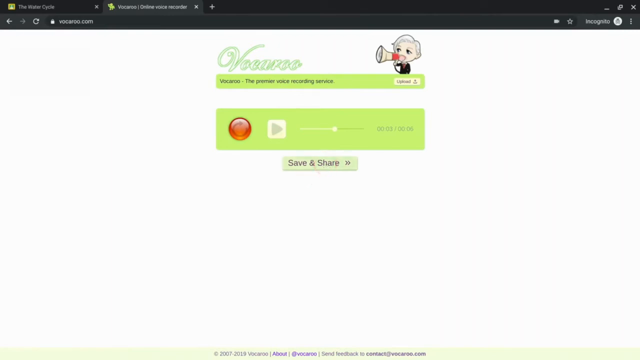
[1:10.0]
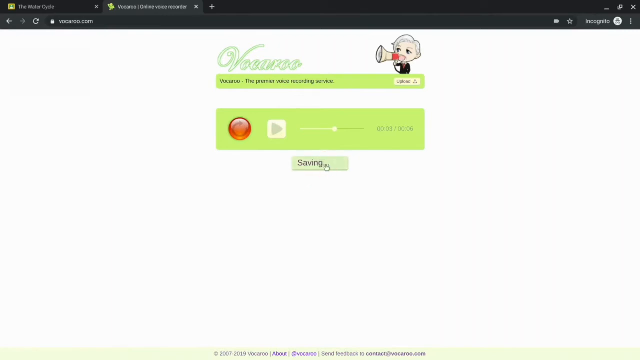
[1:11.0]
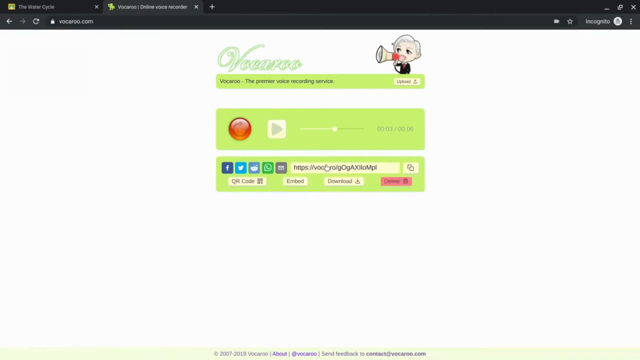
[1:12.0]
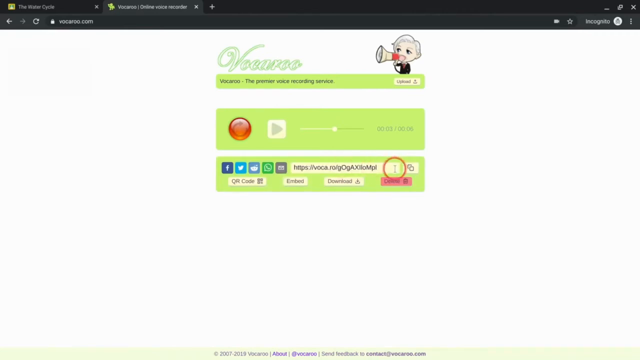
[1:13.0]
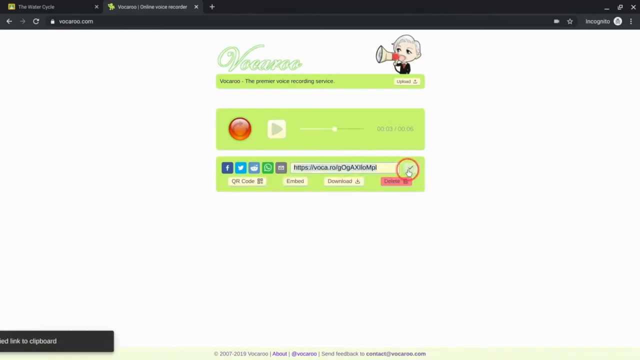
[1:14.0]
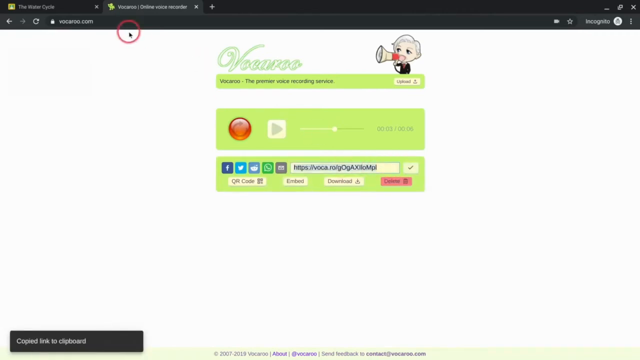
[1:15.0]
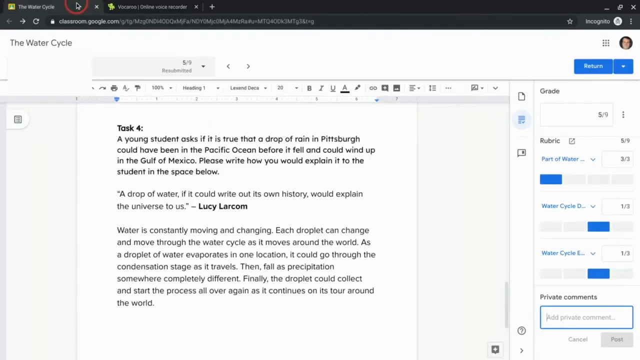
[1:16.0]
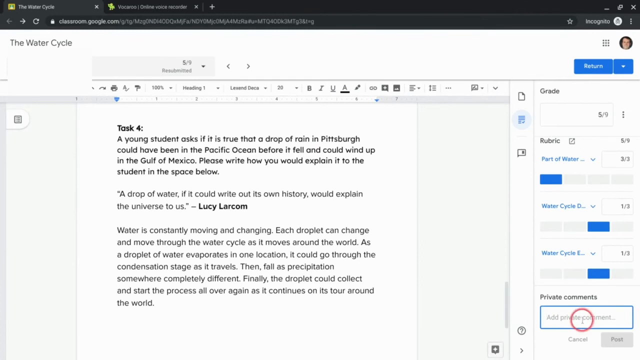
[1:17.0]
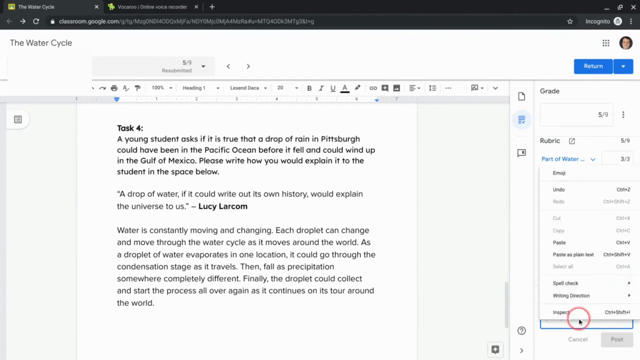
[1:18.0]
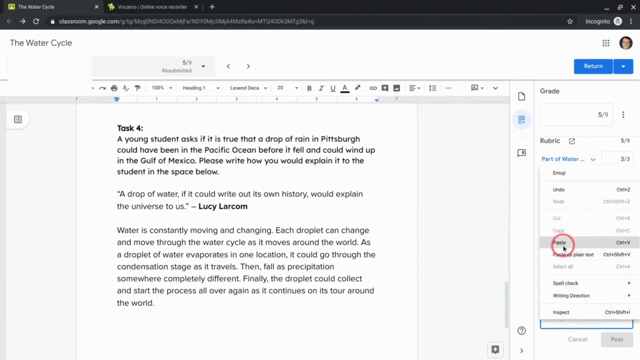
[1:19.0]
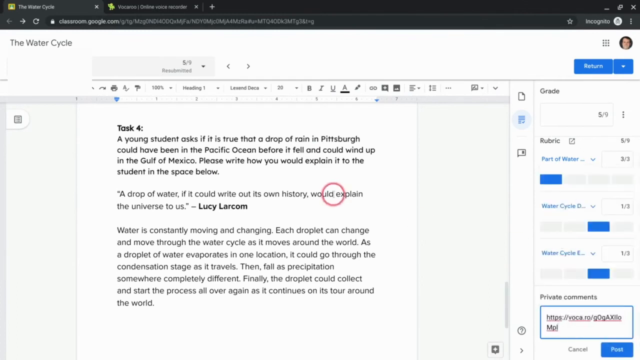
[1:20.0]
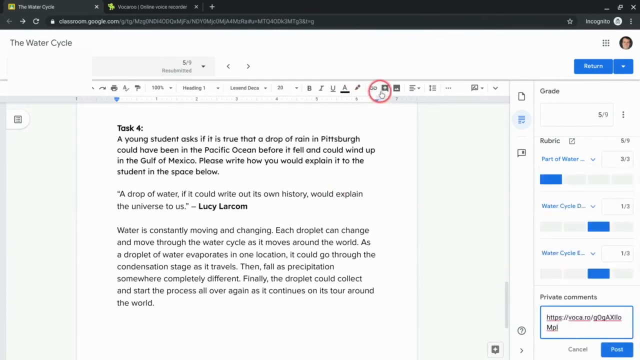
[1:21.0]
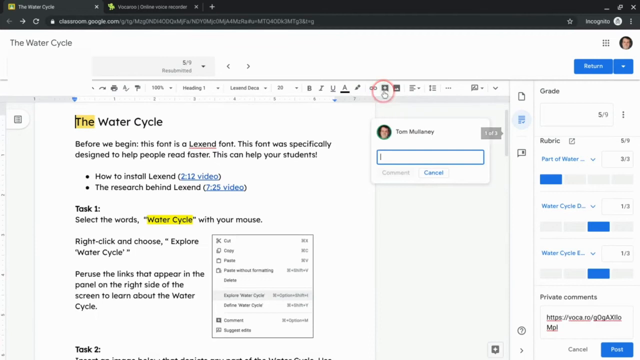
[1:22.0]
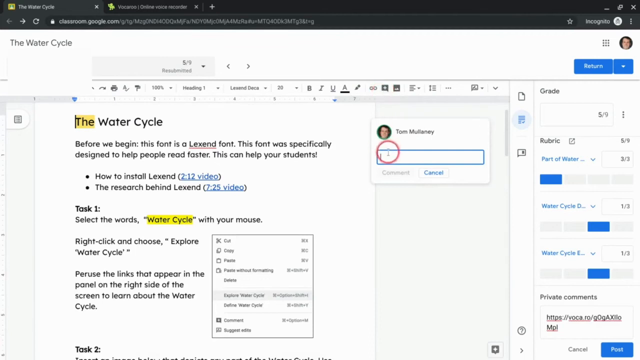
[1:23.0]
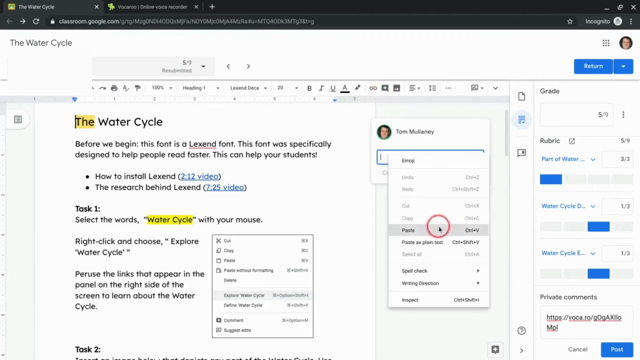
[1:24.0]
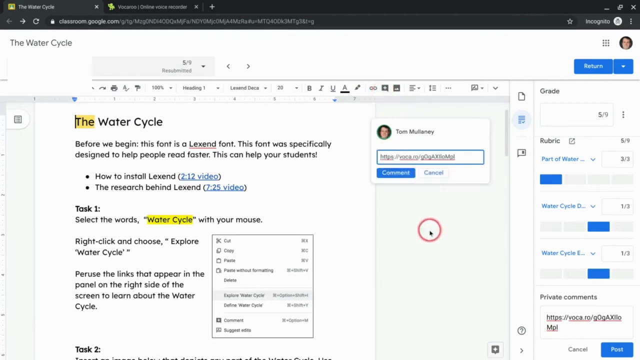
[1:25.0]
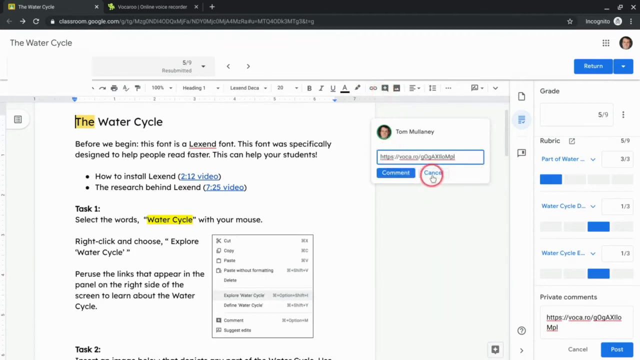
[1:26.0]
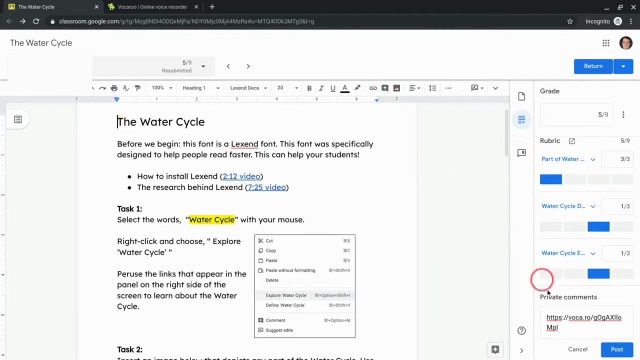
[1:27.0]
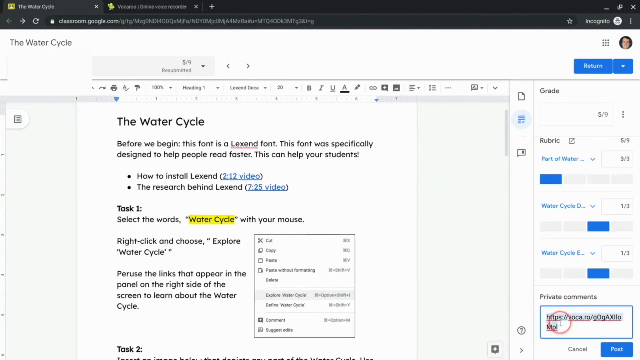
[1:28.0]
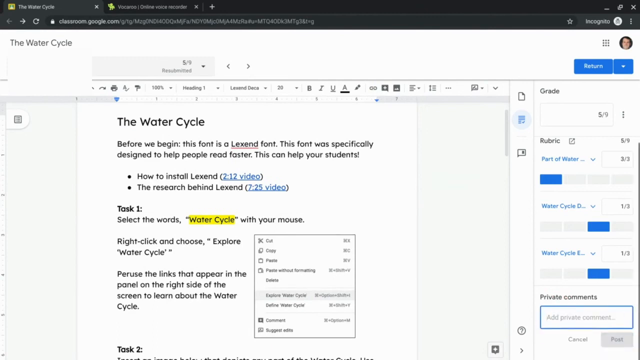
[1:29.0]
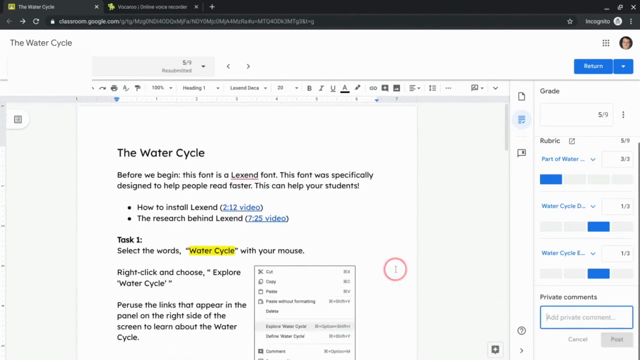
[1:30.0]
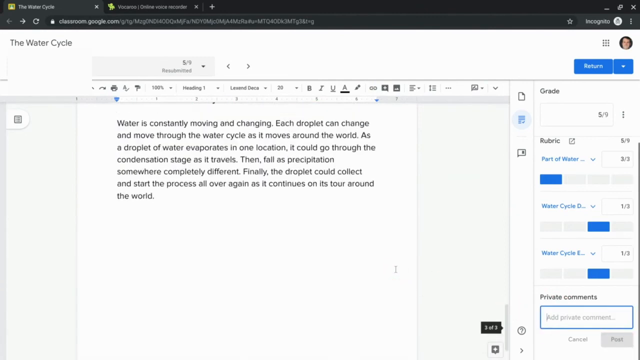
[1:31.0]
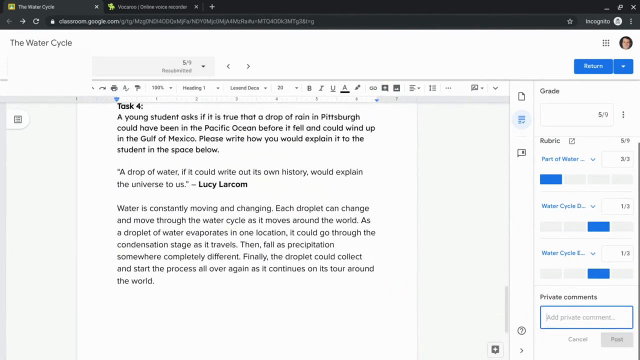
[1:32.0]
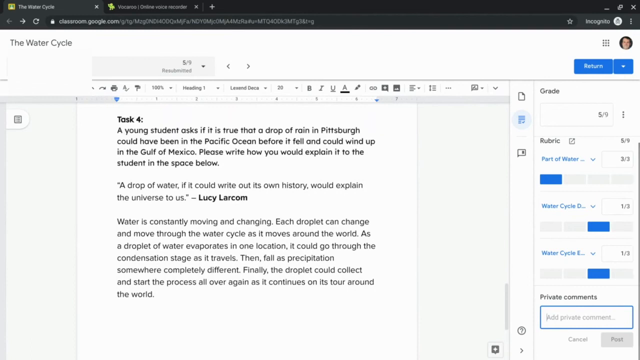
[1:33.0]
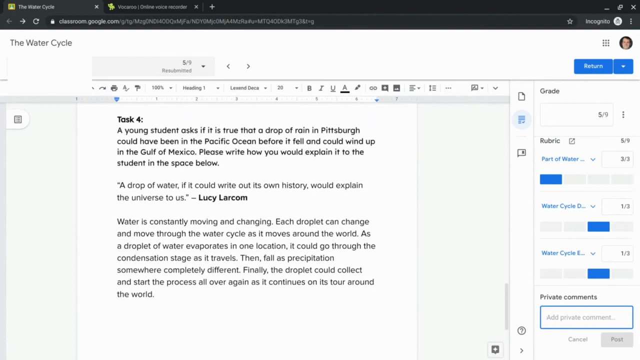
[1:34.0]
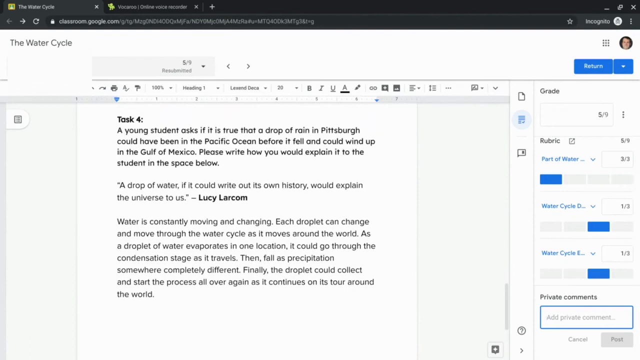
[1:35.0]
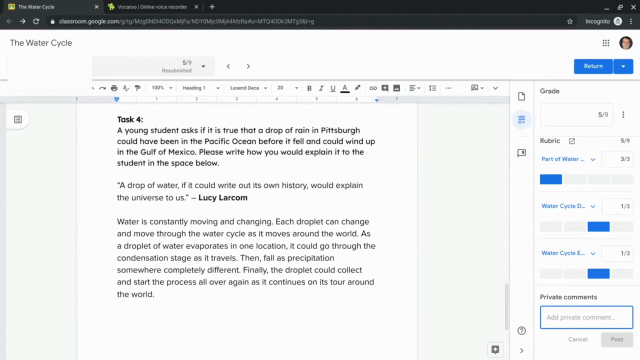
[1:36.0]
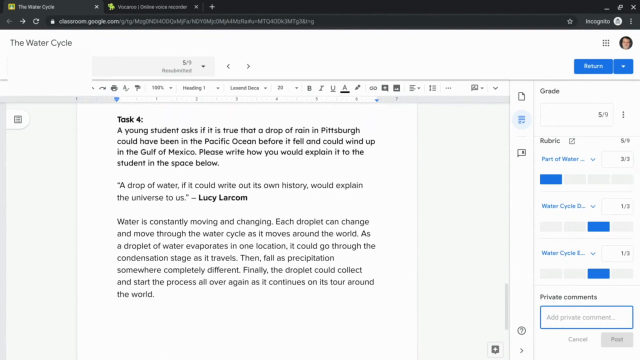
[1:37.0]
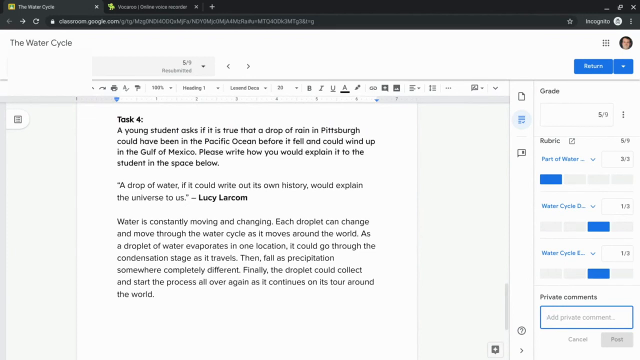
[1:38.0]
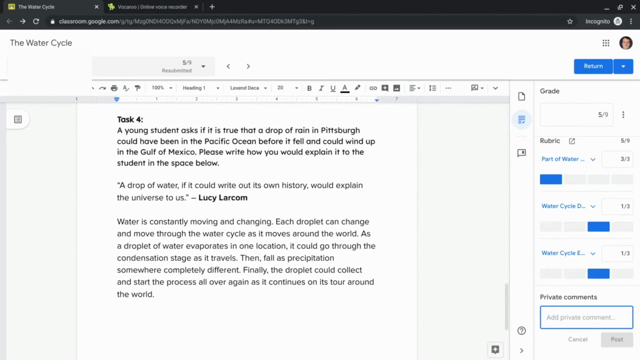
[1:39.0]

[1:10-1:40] The mouse clicks the save and share button on the website. New options appear, with social media platforms such as Twitter, Facebook and Reddit on the left. A URL is shown where the mouse clicked, with a copy option on the right side, and below are options for a QR code, embed and download. The mouse clicks the copy icon, then switches back to the browser tab with the document editor. It goes to the comments section and pastes the copied content. When the icon appears with blank text, it pastes the URL from the website into that as well. It then goes back to the first paste it made and deletes it, and moves around the document.